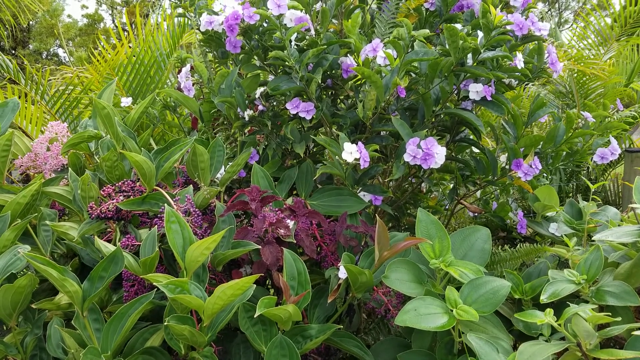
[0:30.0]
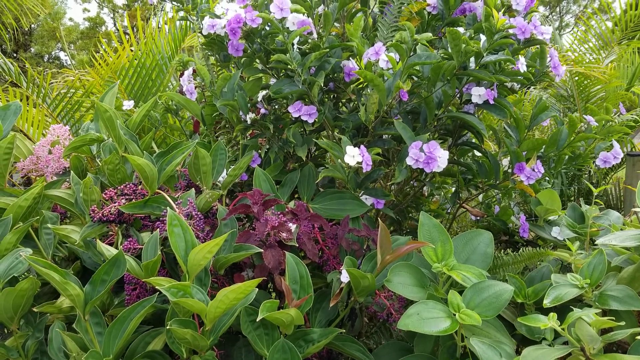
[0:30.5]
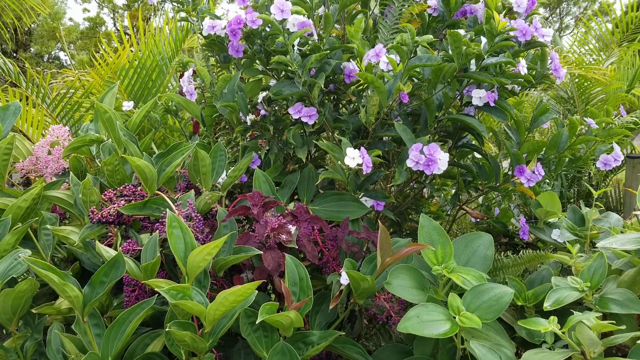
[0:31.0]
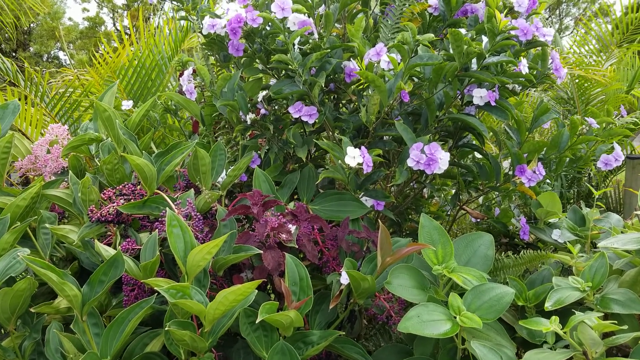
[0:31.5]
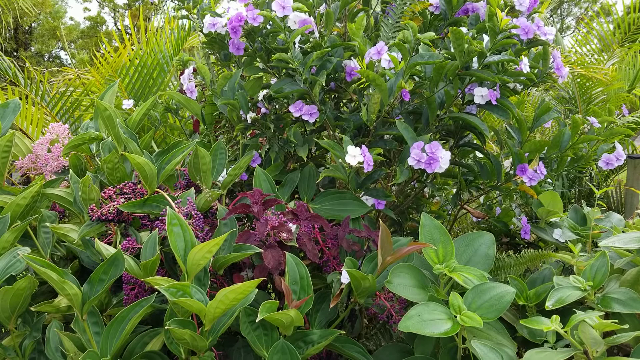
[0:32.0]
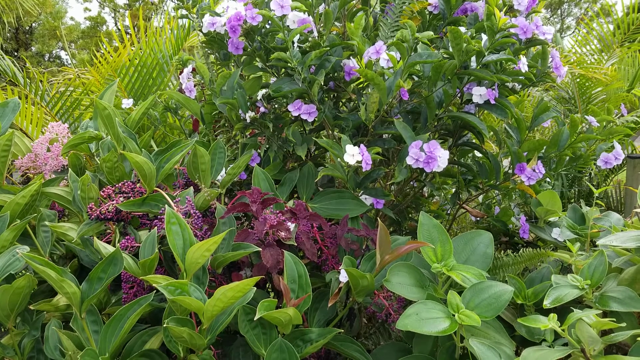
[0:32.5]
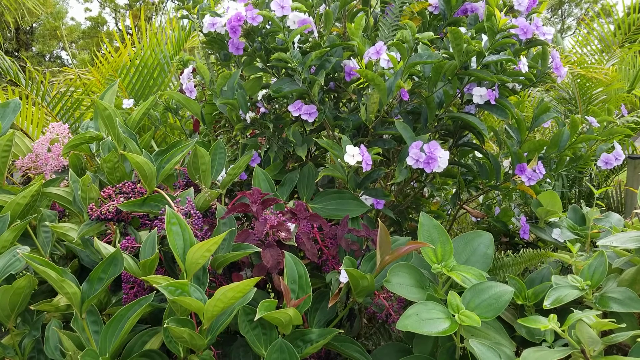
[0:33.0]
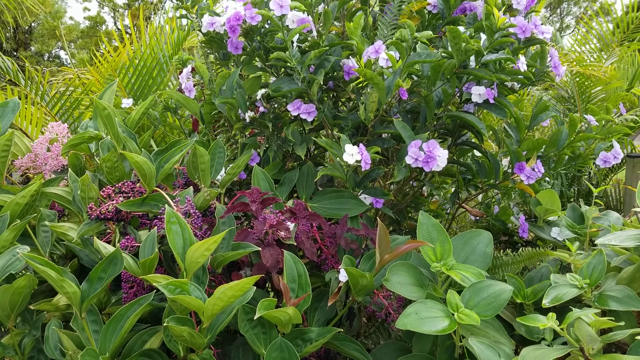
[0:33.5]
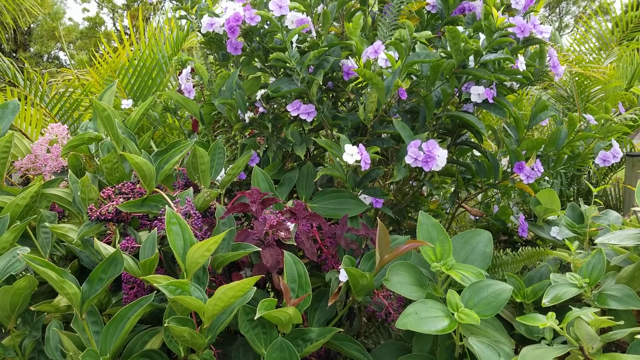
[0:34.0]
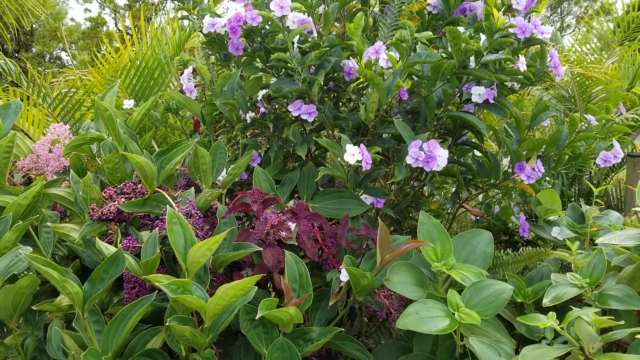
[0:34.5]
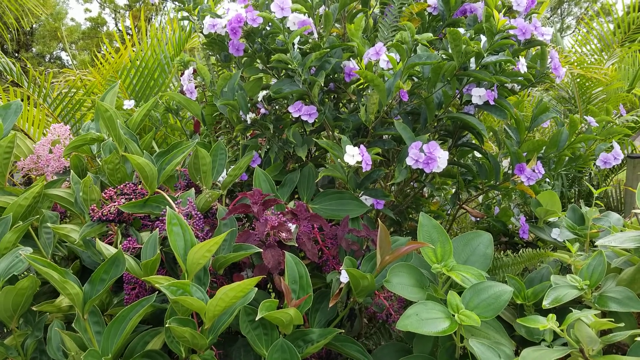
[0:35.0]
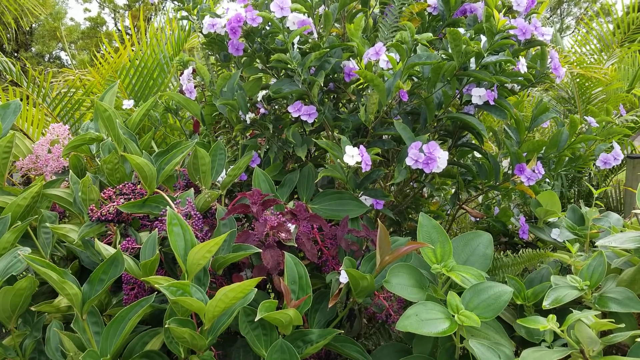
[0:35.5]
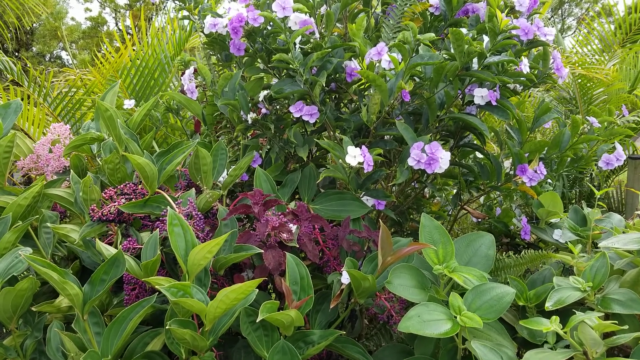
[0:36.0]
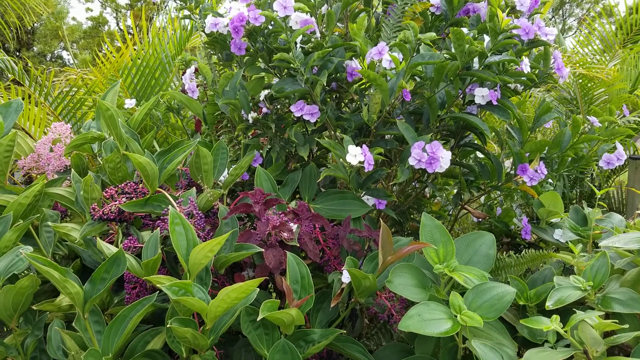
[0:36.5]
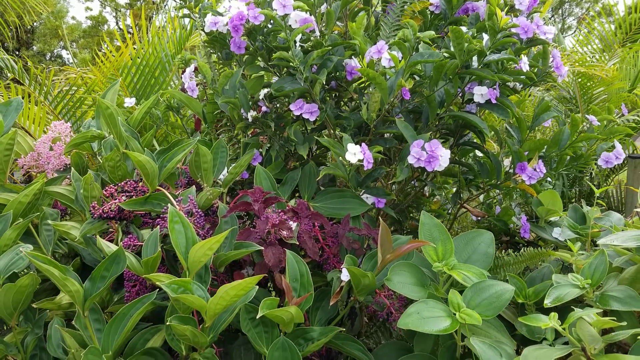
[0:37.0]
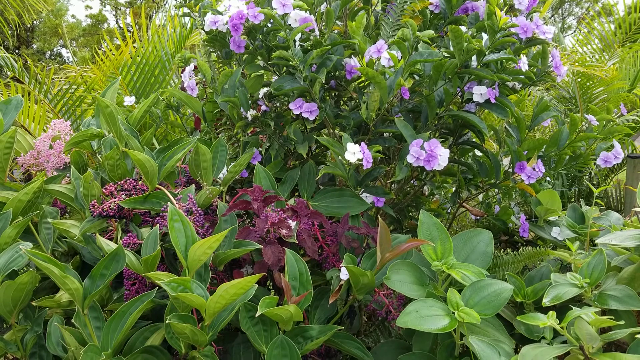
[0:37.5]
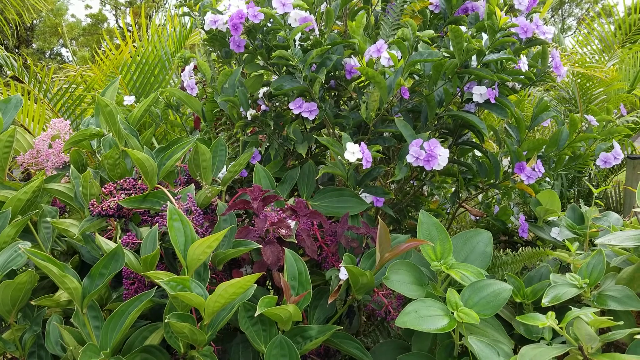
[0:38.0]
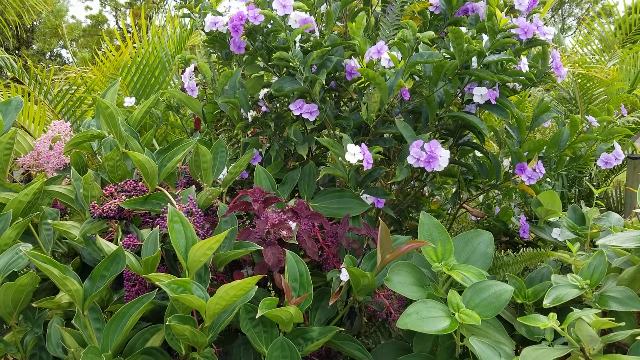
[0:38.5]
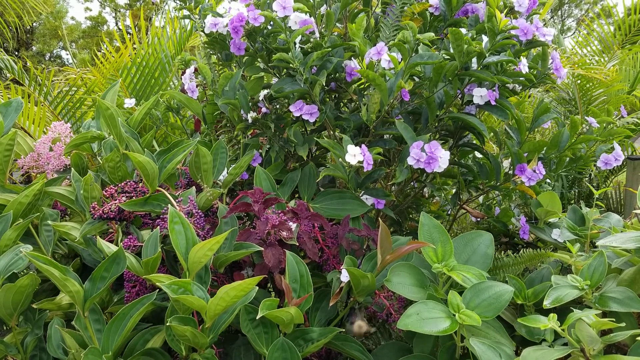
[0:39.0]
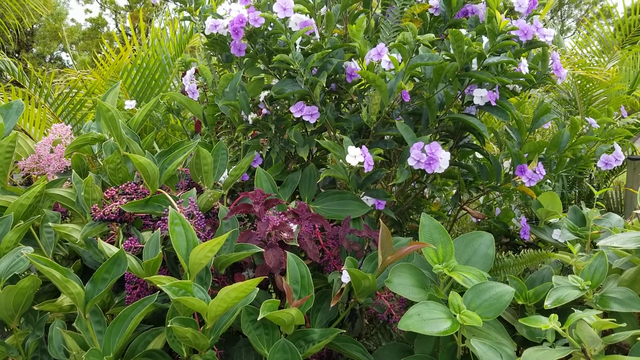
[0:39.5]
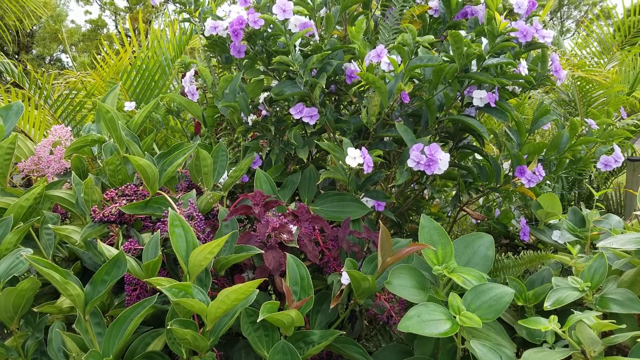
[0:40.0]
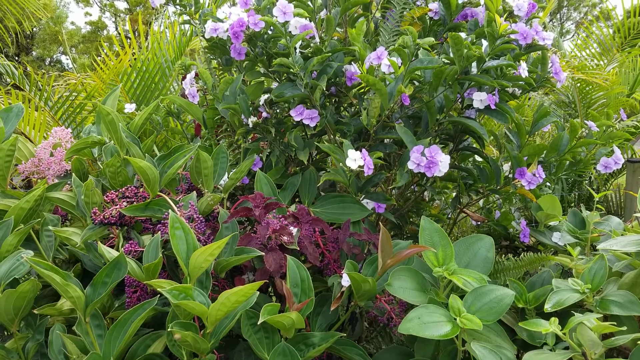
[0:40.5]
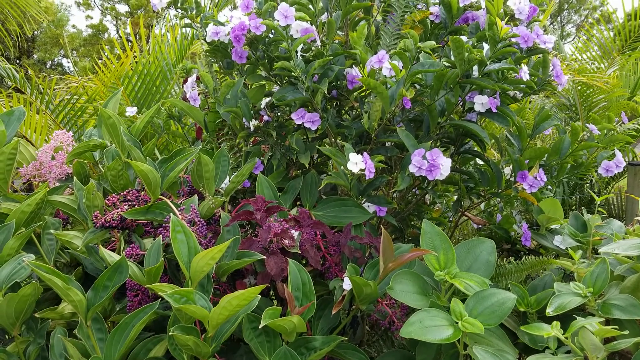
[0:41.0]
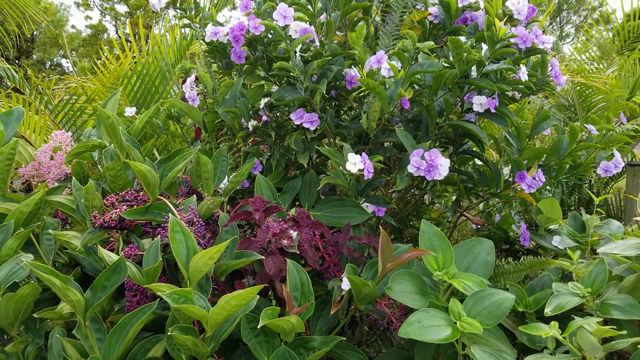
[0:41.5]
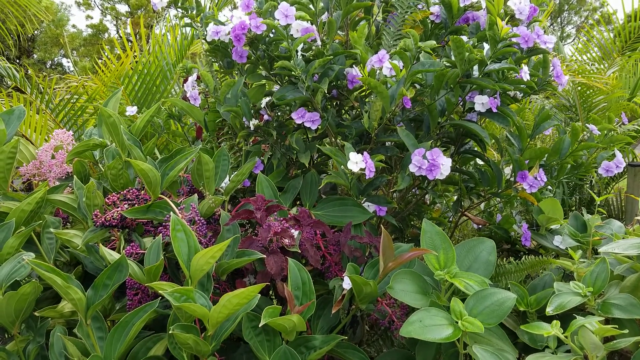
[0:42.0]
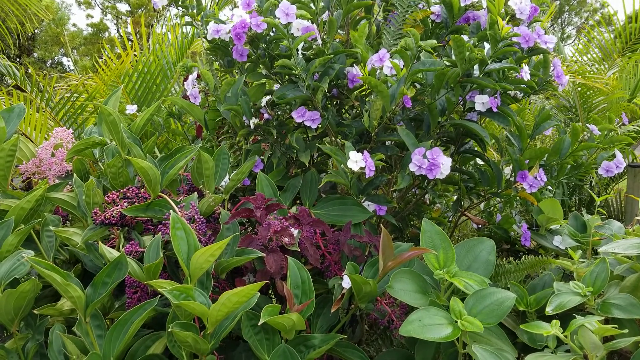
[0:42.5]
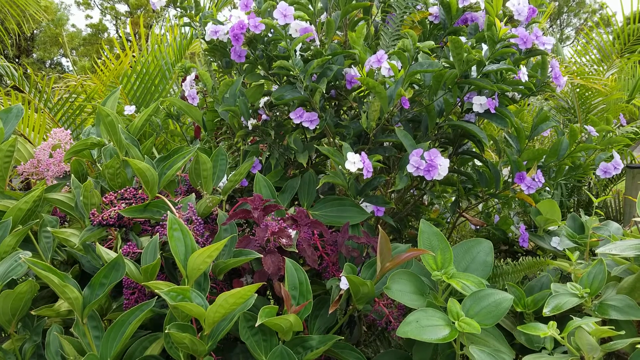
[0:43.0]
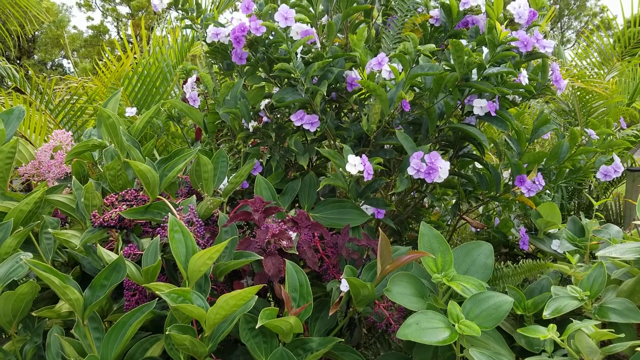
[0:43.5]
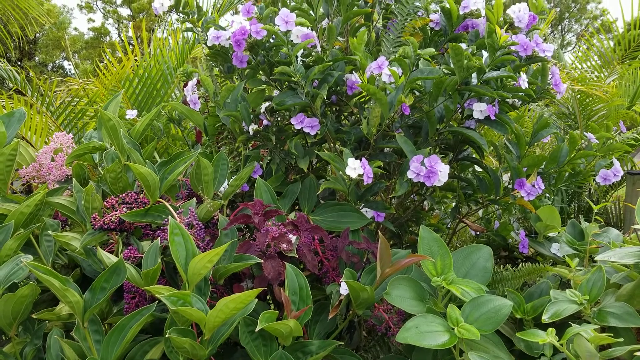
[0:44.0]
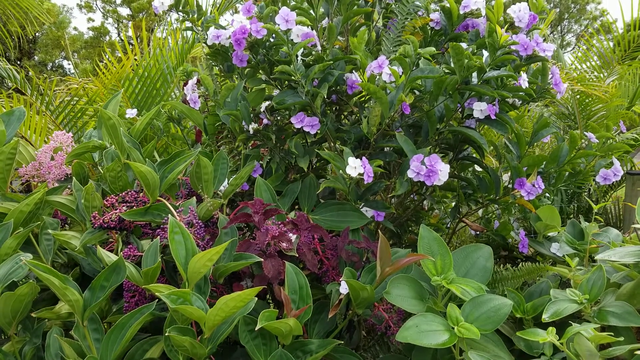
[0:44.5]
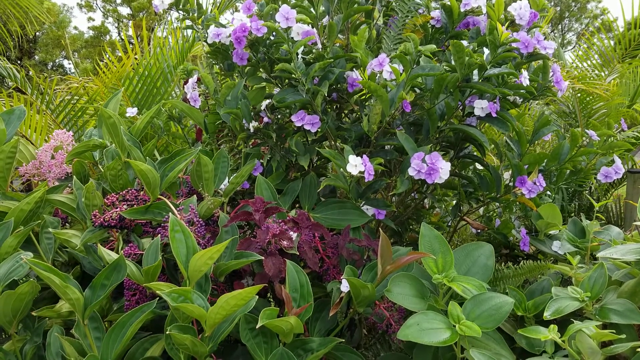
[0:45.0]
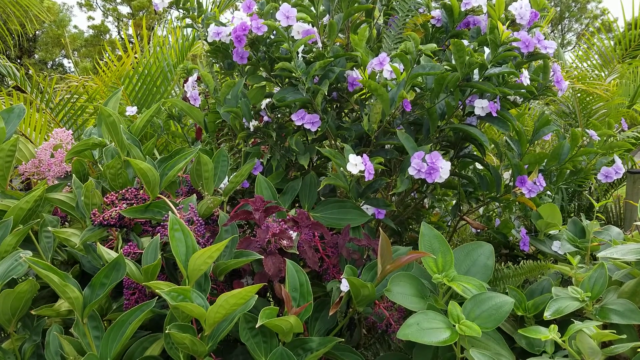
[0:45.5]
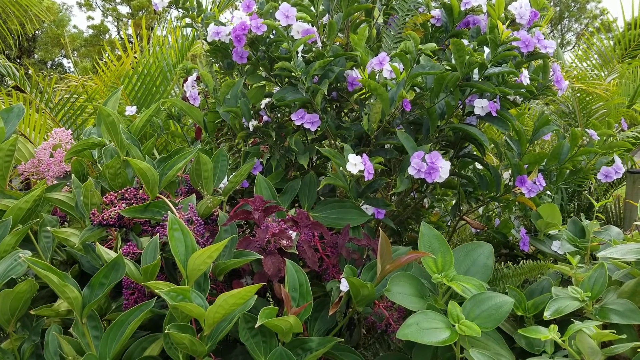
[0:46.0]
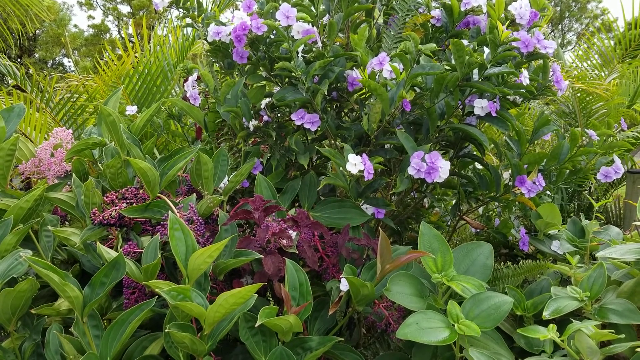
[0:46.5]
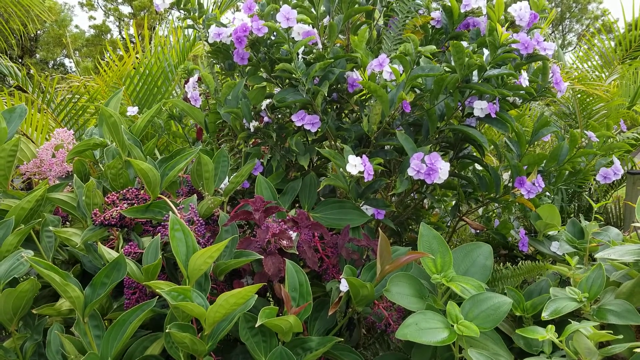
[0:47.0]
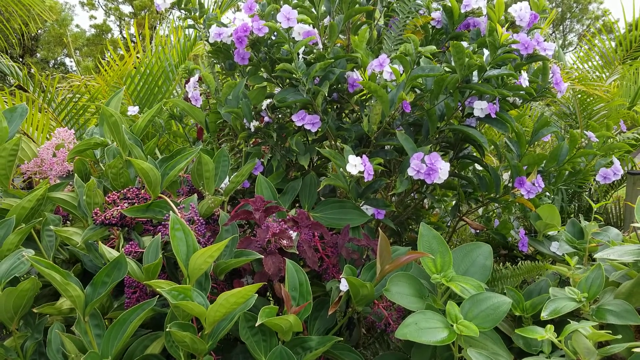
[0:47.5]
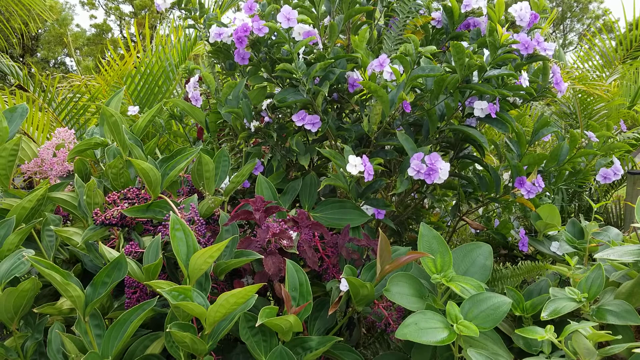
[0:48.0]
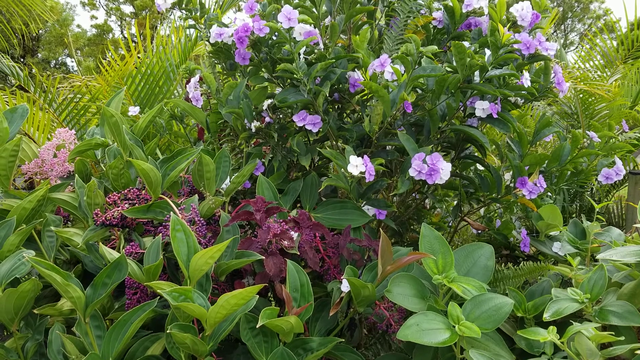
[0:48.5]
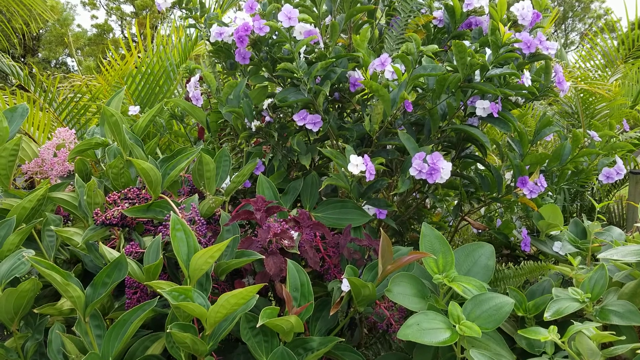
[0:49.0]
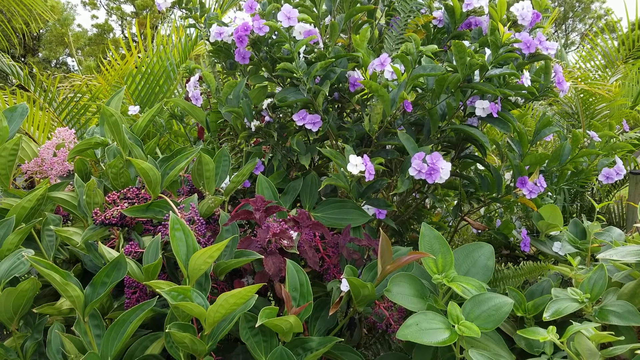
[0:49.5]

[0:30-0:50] Nothing is on the screen except plants. The main plant is a dark green bush with small light purple and white flowers growing at the ends of its branches, sprinkled throughout the bush. On the left and right sides of the bush are other light green leafy plants with very long, skinny, pointy leaves. In front of the bush are small green plants only about an inch, maybe two inches, off the ground; they are not tall and have big green leaves. A small maroon plant with maroon leaves is at the base of the bush, with what looks like the start of small maroon flowers growing. To the left of the bush with purple flowers, a small group of pink flowers grows together.